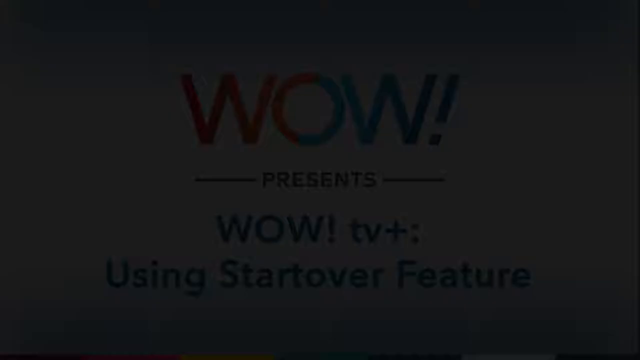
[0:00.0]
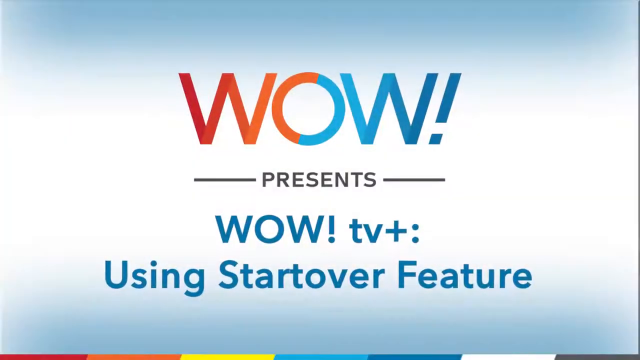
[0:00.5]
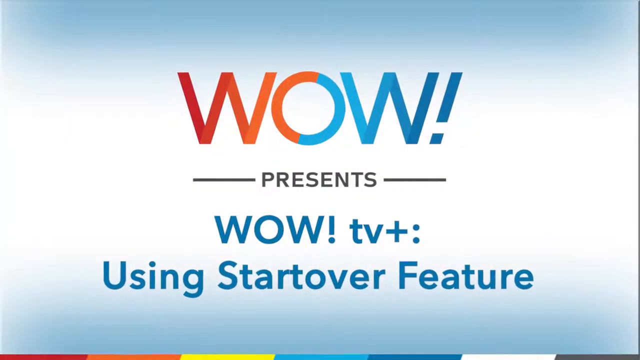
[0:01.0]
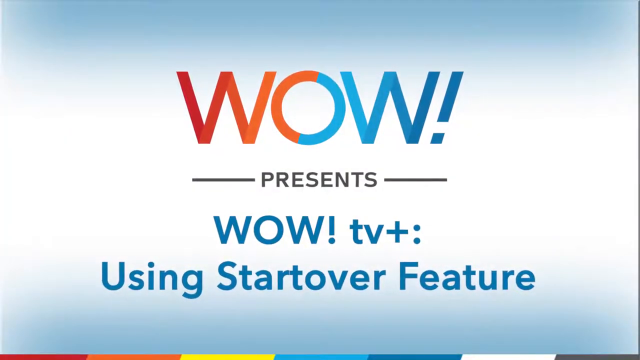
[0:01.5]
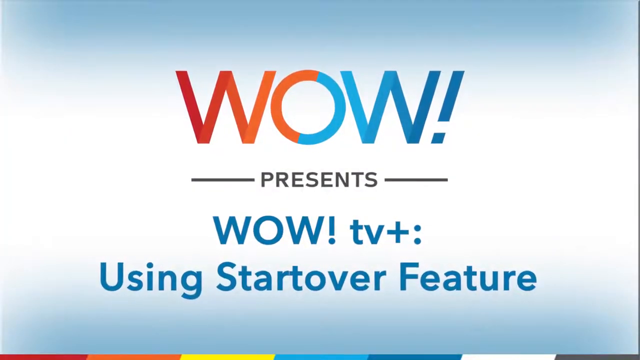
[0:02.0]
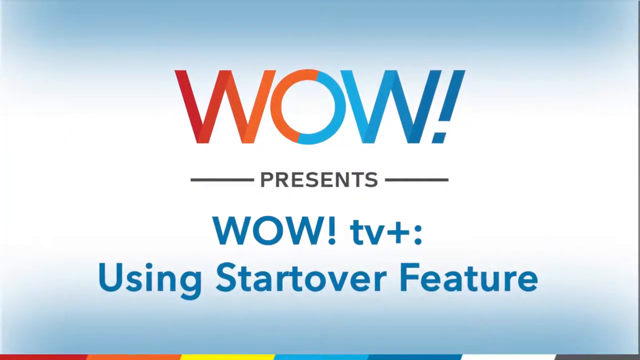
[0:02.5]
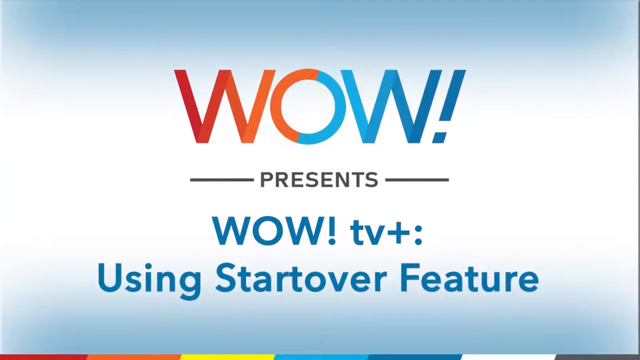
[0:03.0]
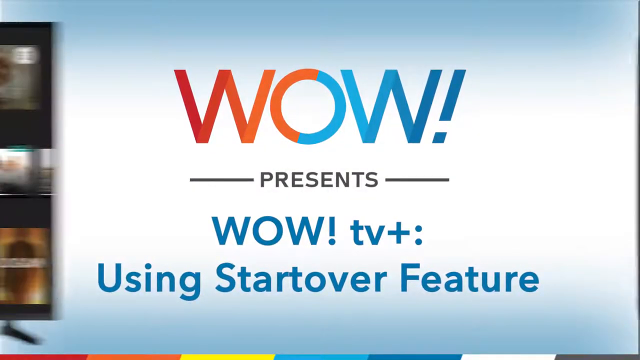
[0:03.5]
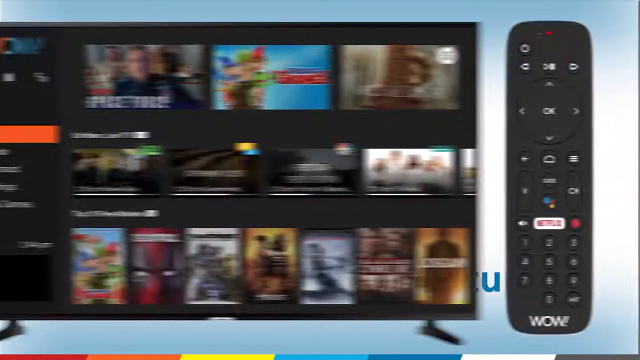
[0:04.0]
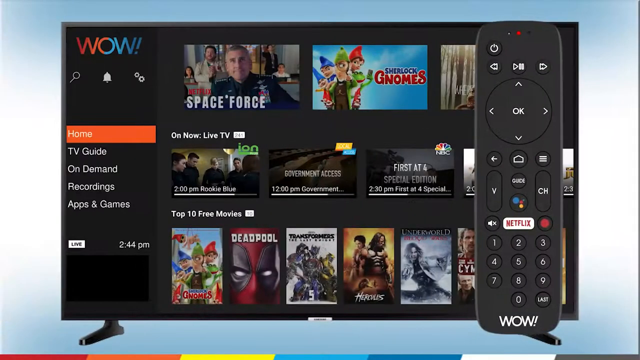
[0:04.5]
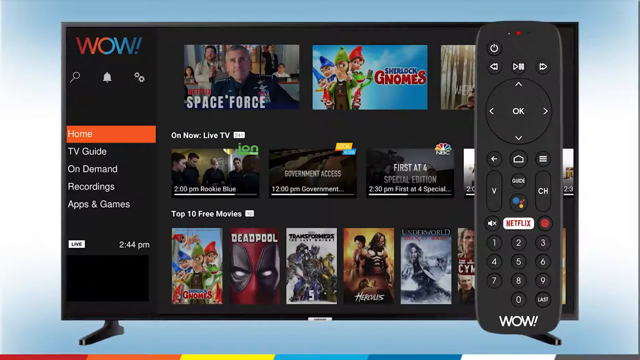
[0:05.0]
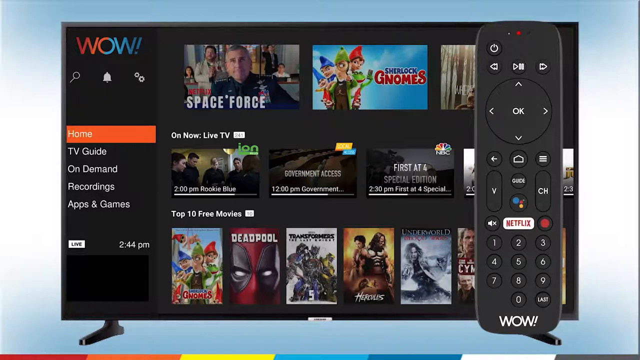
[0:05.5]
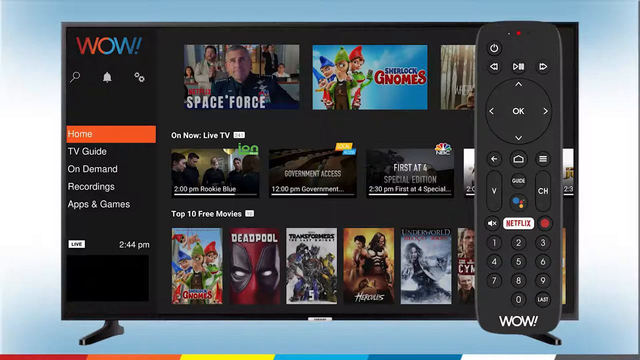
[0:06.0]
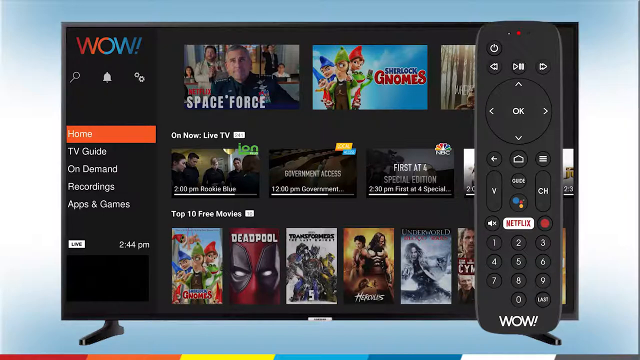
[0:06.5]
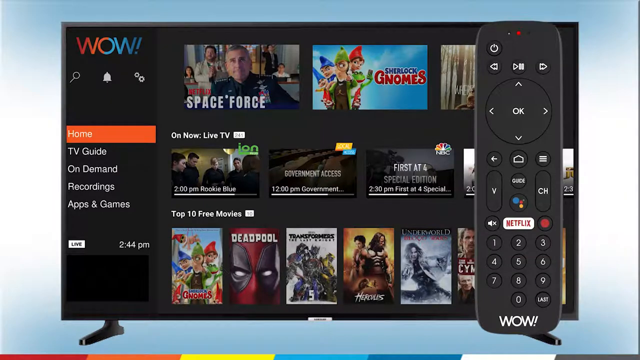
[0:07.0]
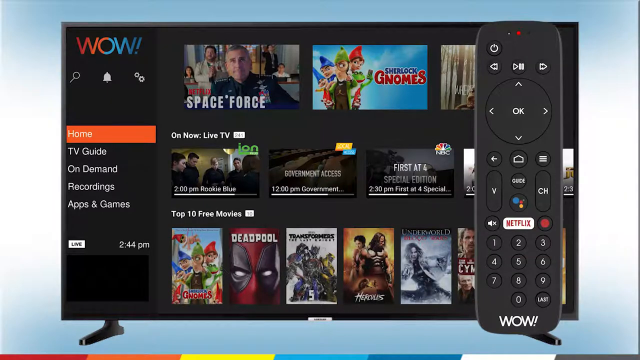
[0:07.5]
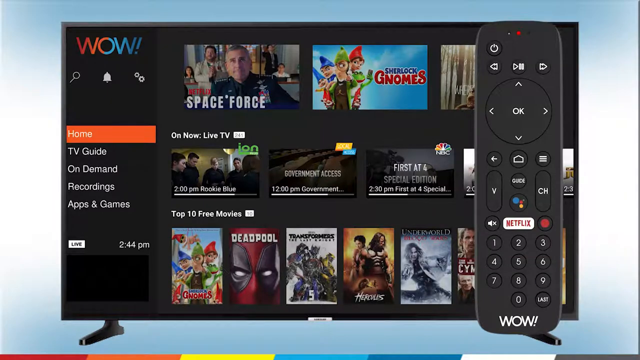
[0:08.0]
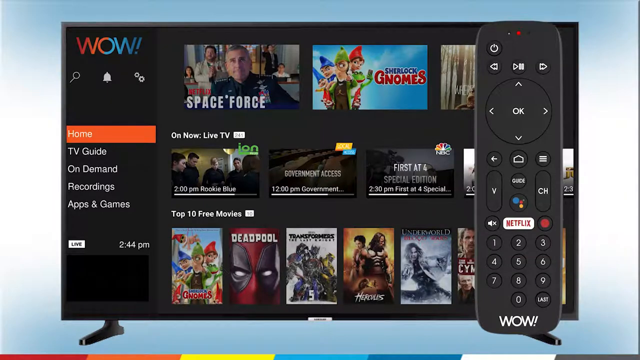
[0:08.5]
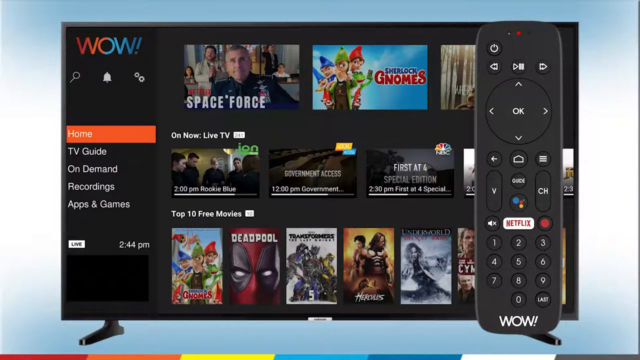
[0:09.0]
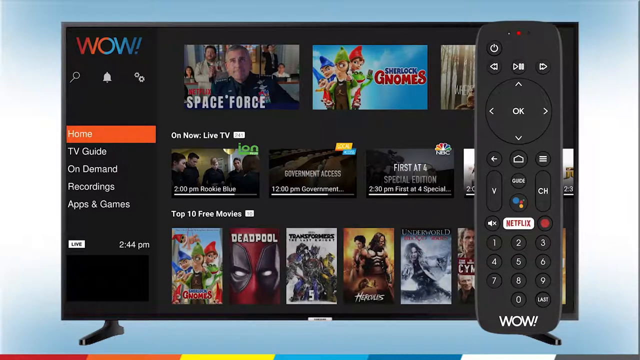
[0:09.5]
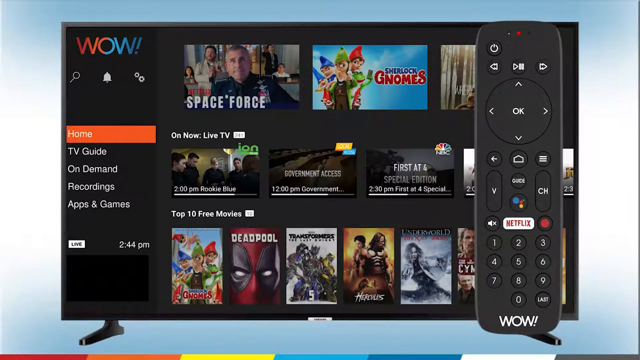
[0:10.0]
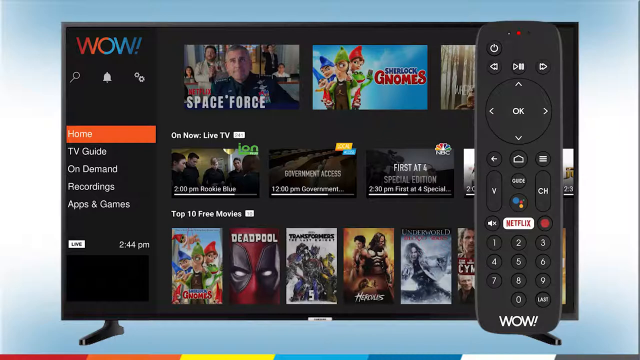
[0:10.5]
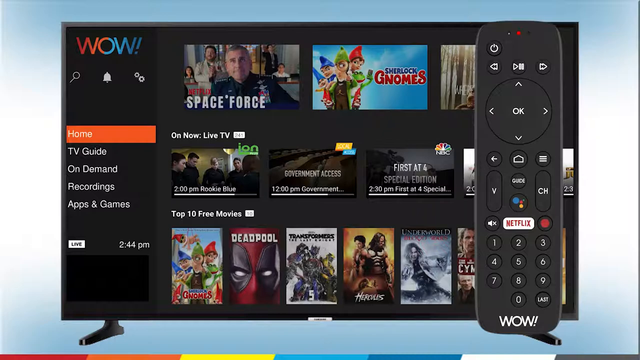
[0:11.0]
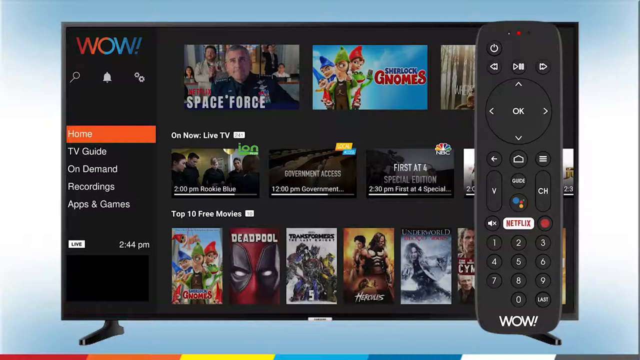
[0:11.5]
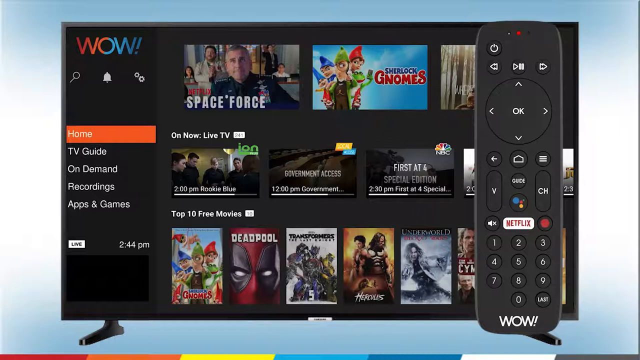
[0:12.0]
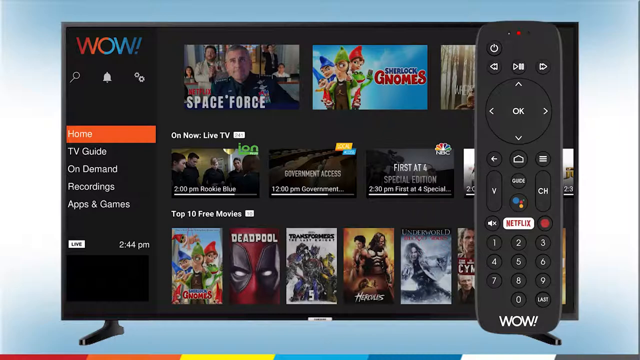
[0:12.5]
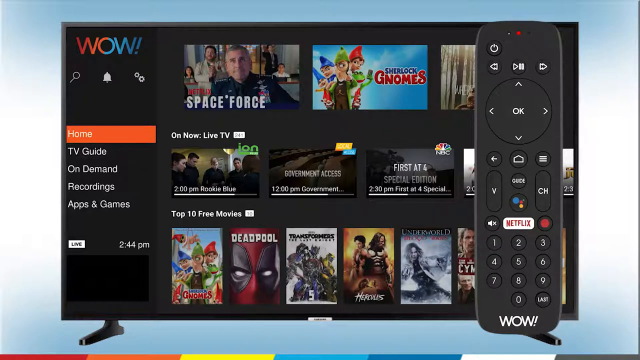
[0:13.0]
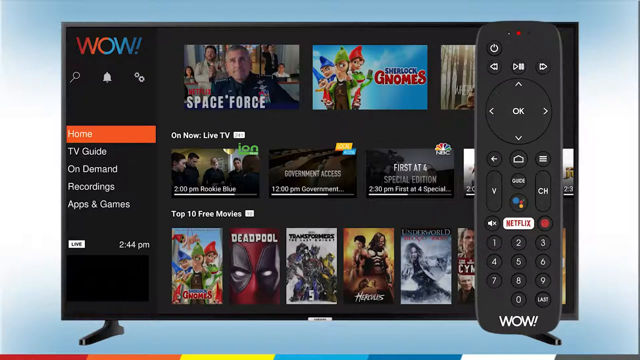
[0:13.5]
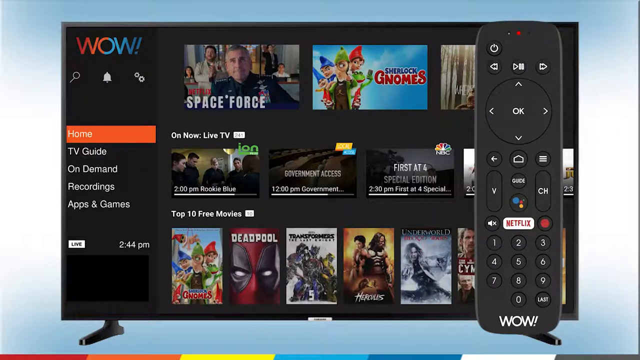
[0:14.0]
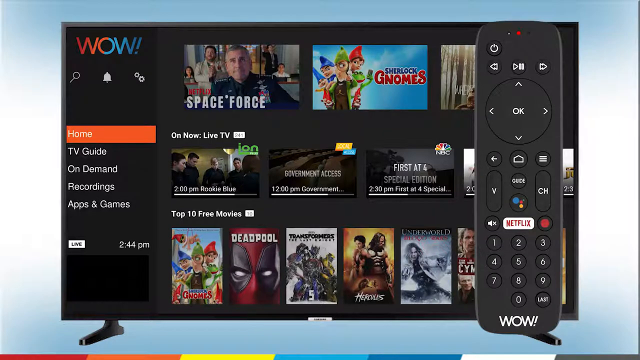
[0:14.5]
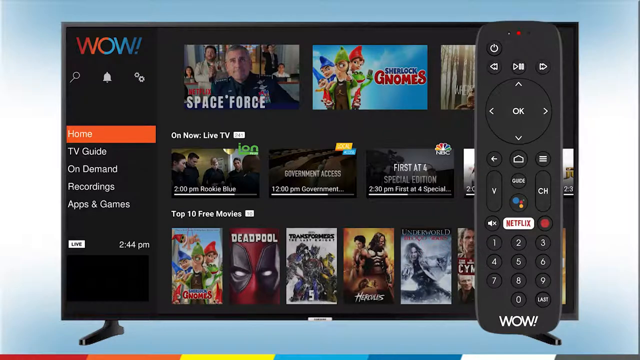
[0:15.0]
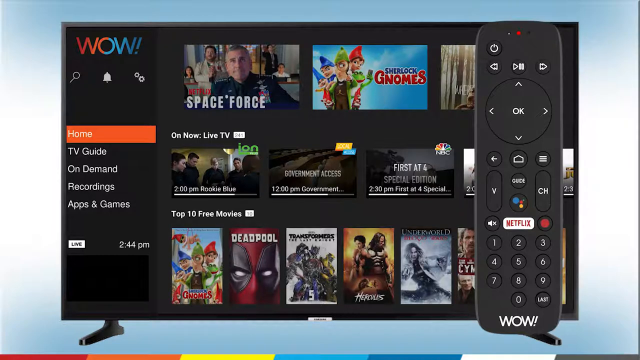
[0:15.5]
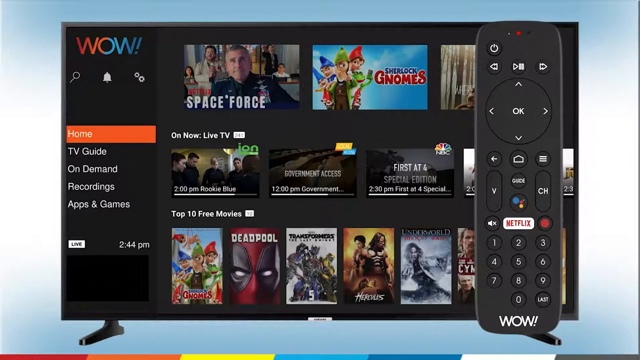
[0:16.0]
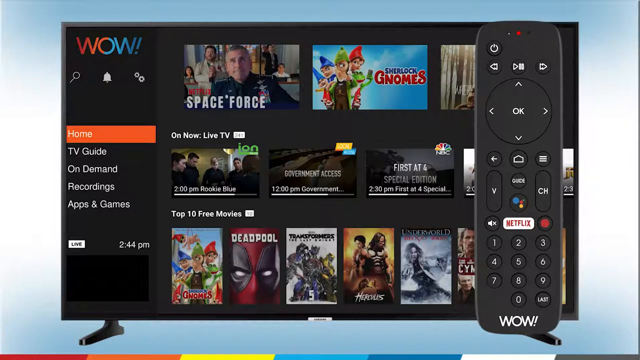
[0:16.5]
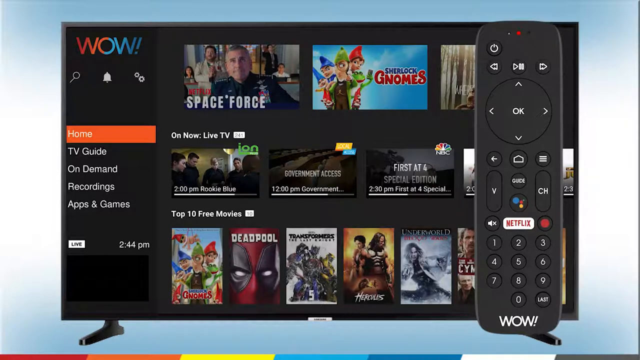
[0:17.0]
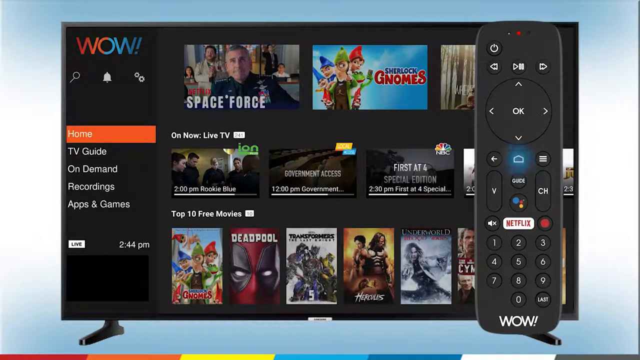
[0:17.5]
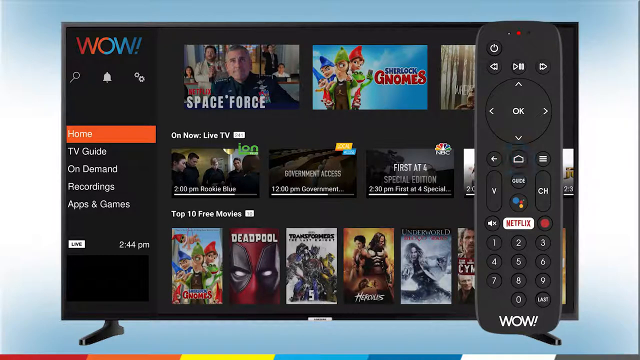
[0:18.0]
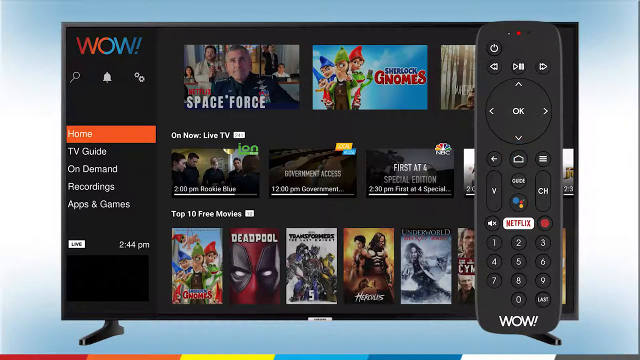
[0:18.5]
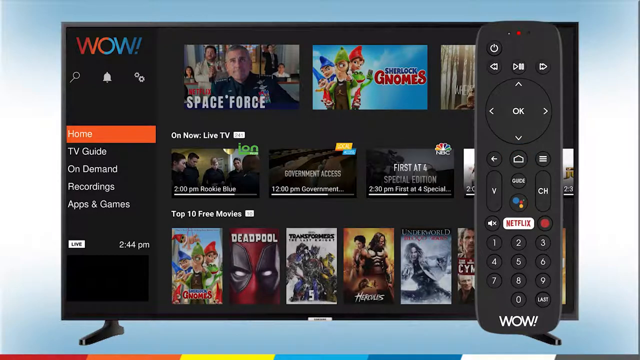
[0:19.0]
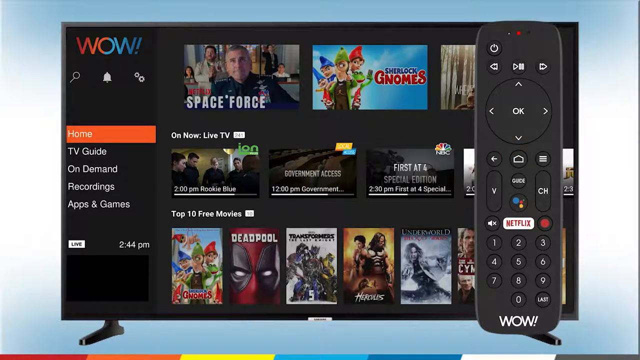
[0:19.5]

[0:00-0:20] The video looks to be something like a presentation. A gradient background runs from white to blue, and in the foreground text reads "Wow! presents wow! TV+: using start over feature". The view slowly zooms, somewhat, into the text. Then what looks like a television screen pops out from the left and slides into the center, while a remote slides in from the right and stops on the right side of the image. The television appears to show a home screen for a TV app, with some shows and movie covers on it. The remote looks like a regular black remote, with number buttons and what looks like a Netflix button. This screen seems to stay the same for quite a few seconds. At one point the home button on the remote lights up, seemingly highlighted.